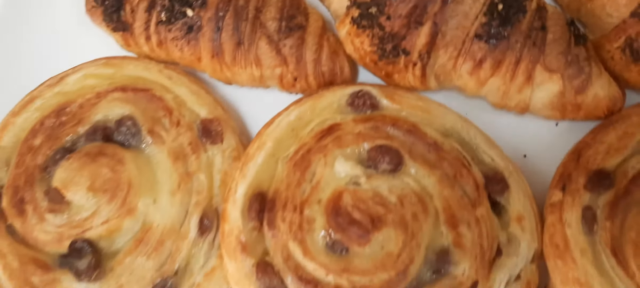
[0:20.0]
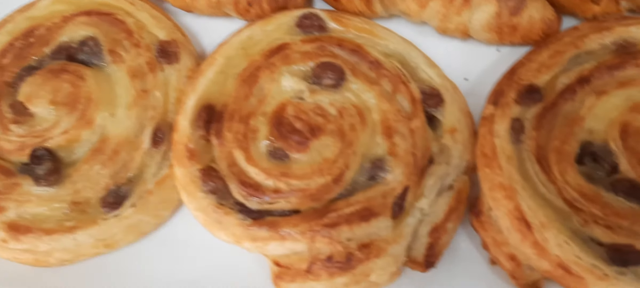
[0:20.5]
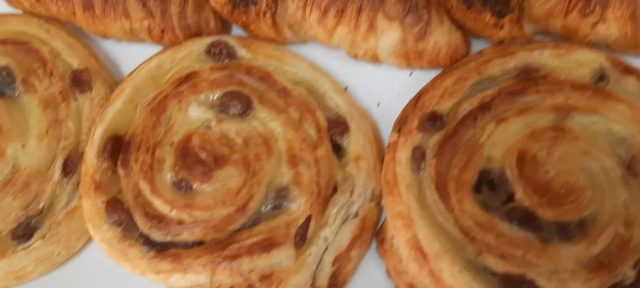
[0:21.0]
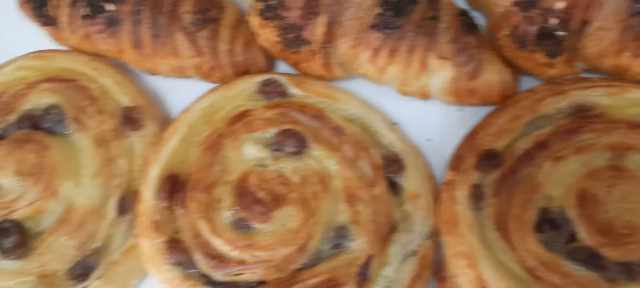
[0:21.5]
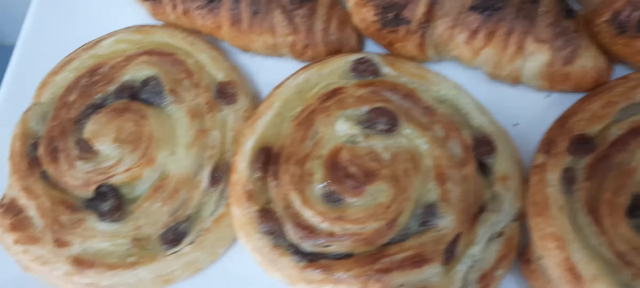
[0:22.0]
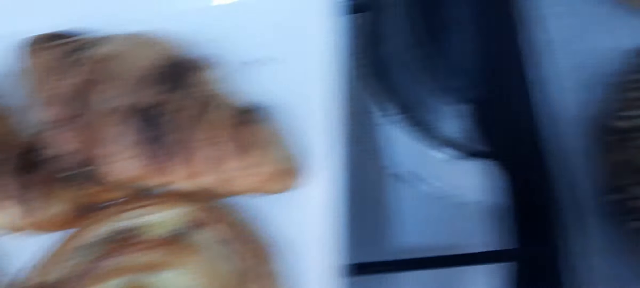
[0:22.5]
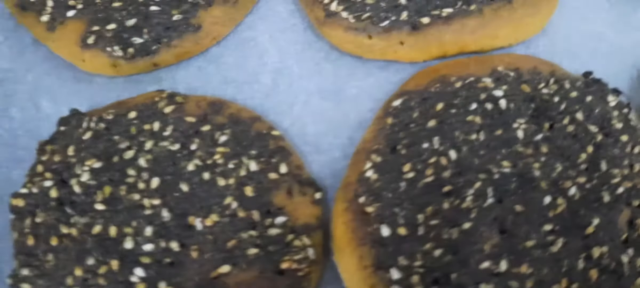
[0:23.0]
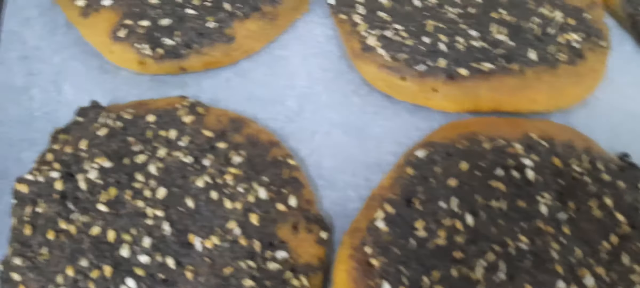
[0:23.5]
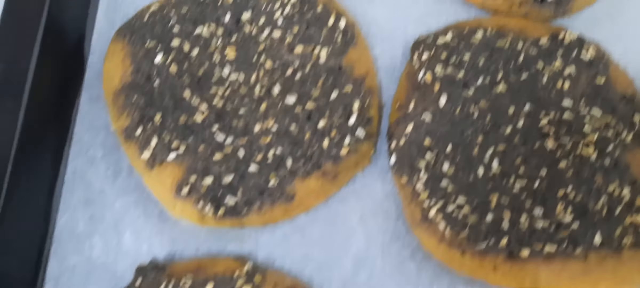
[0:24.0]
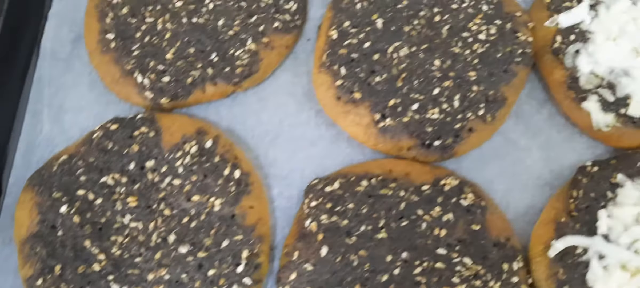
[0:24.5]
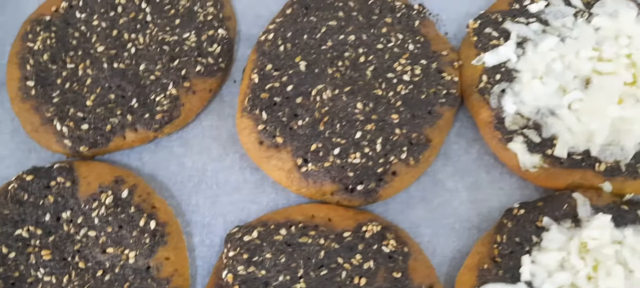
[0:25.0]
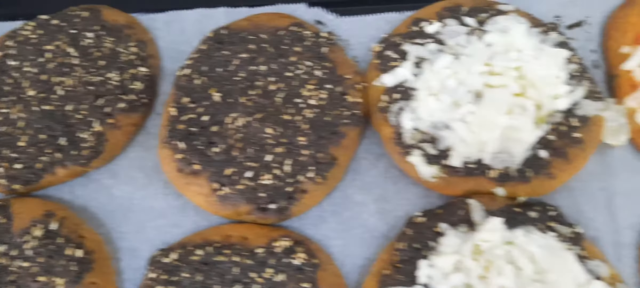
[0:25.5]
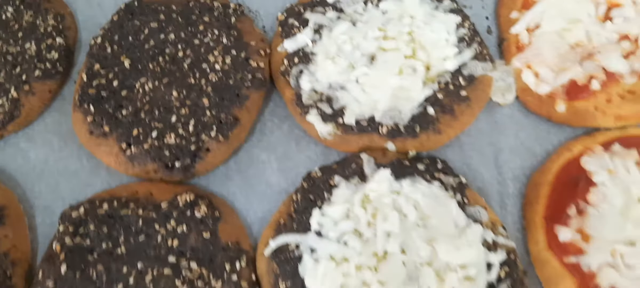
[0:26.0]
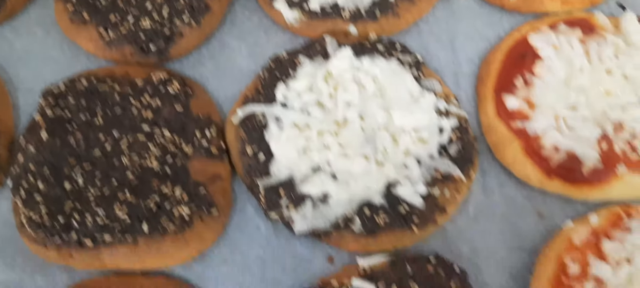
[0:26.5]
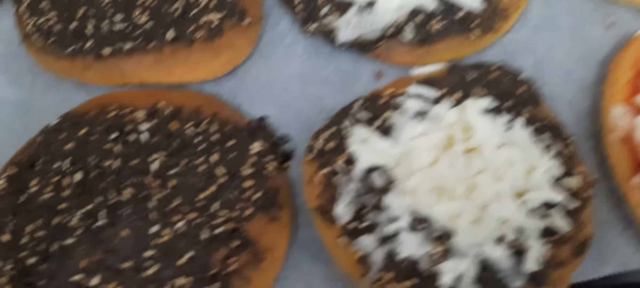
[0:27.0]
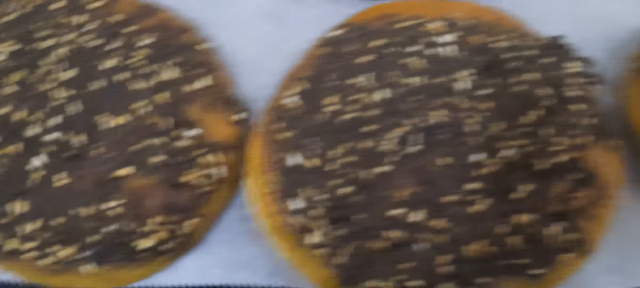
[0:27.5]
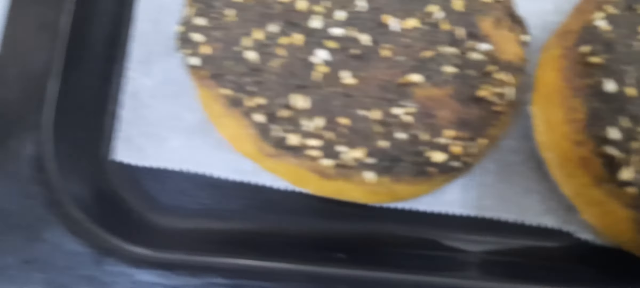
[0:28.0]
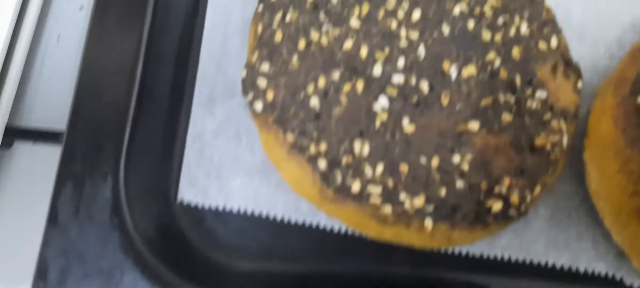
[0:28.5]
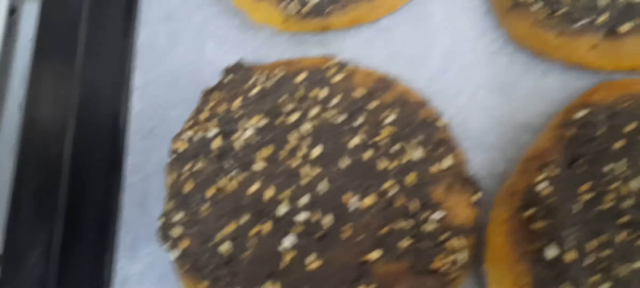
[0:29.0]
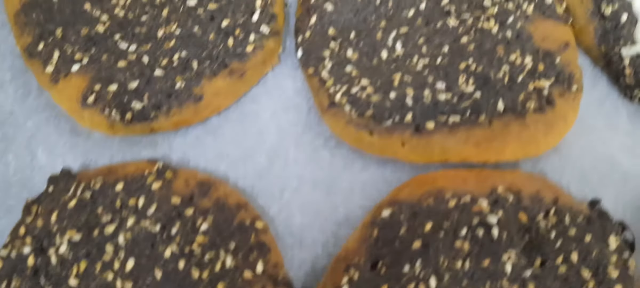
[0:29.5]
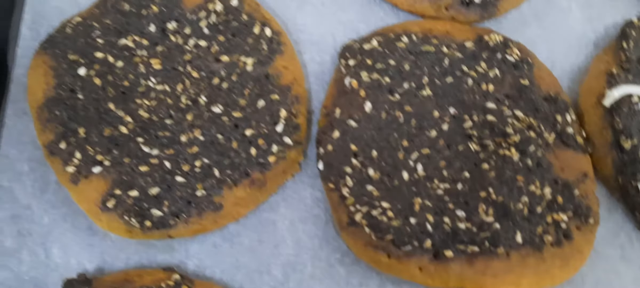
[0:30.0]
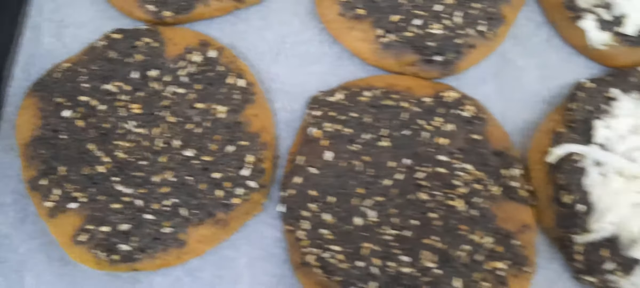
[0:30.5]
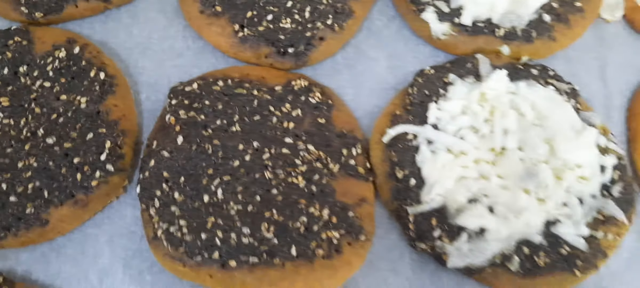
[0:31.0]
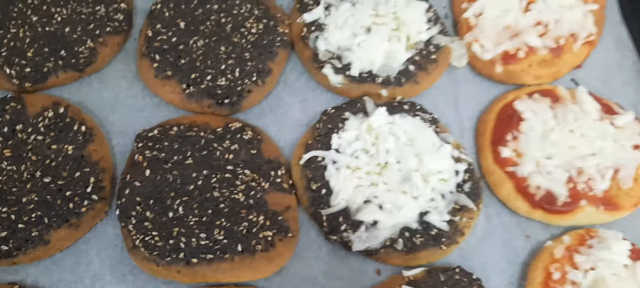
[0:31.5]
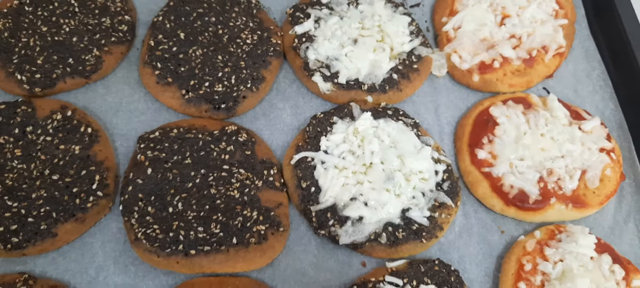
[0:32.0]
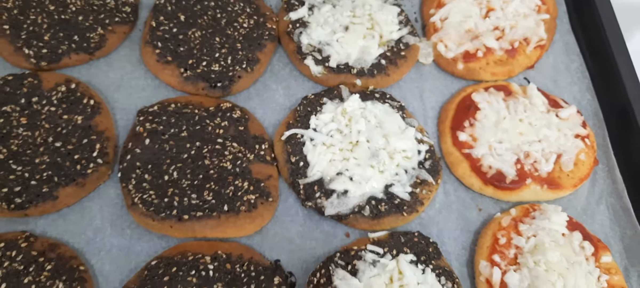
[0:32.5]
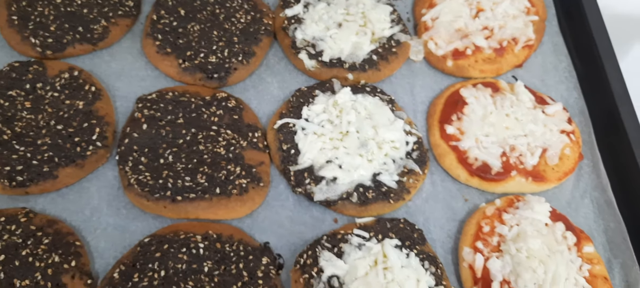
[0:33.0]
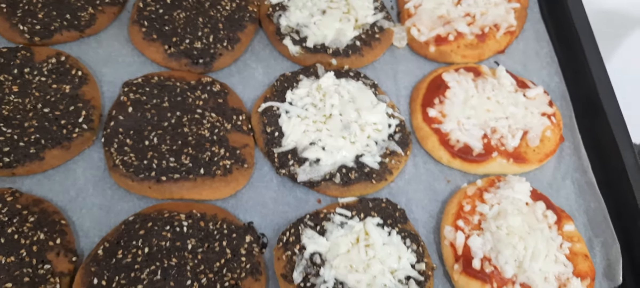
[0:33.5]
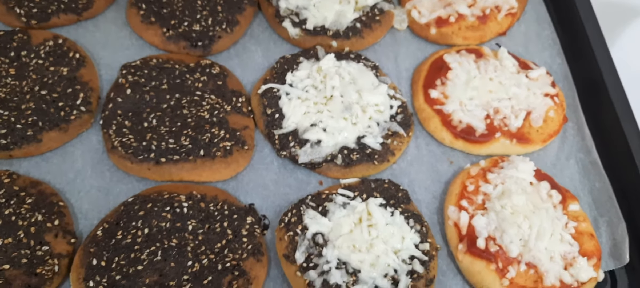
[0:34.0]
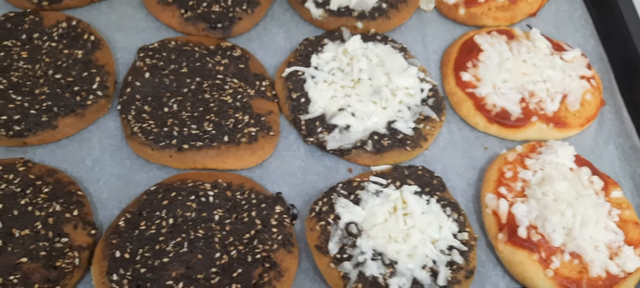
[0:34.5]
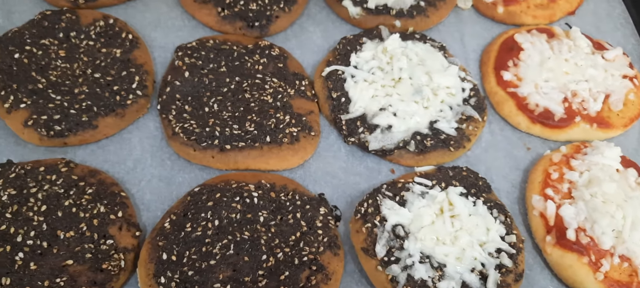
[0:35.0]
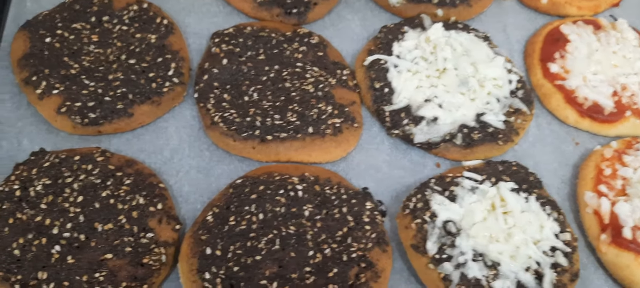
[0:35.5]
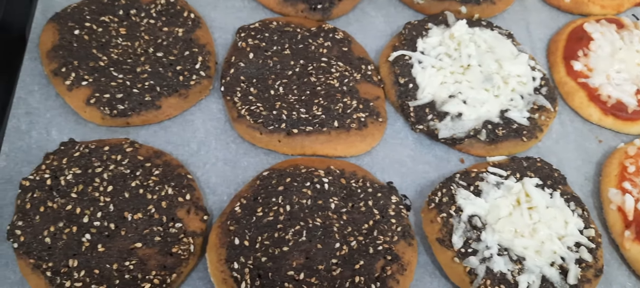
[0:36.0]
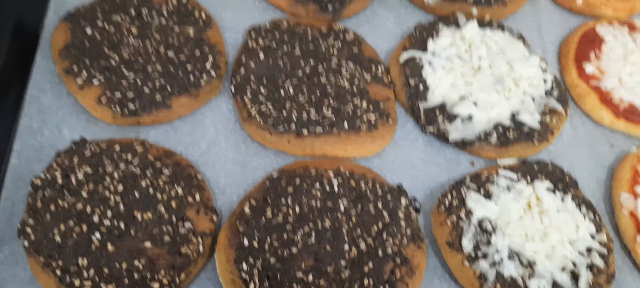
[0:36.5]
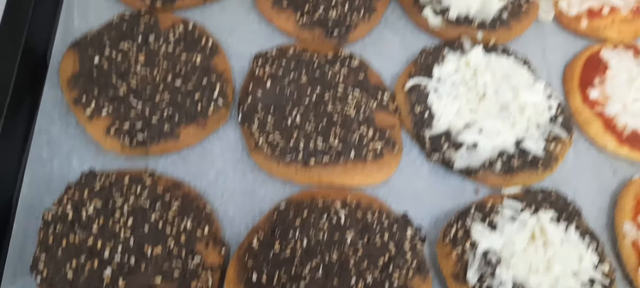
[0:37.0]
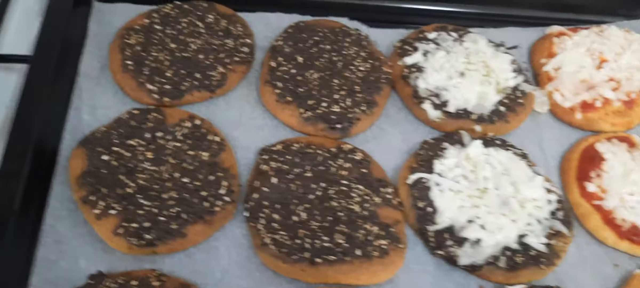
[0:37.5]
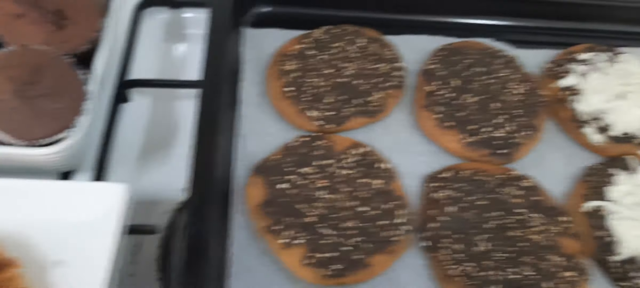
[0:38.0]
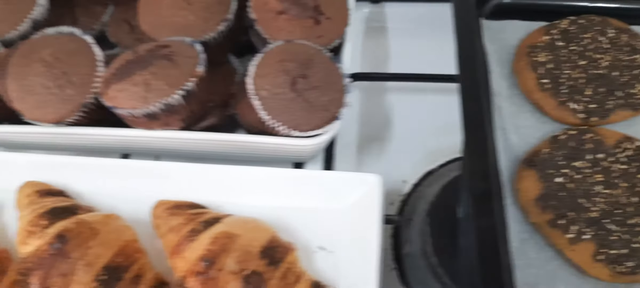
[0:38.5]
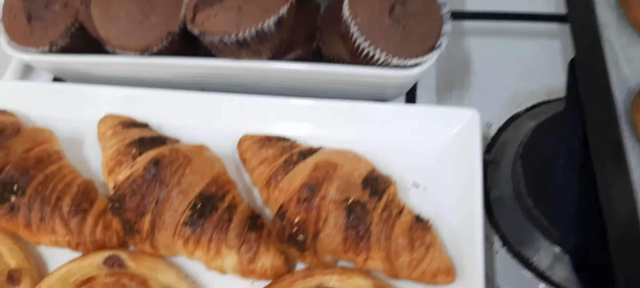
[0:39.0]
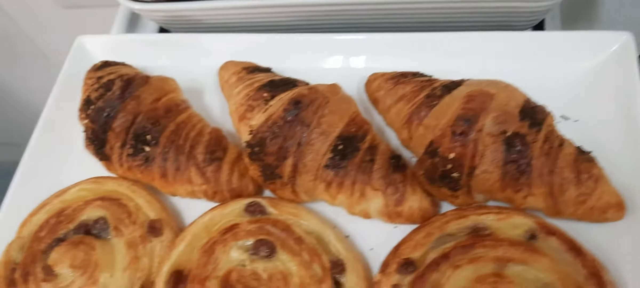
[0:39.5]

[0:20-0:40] A white platter has three light brown and tan croissants at the top, with a couple of dark spaces on them. Underneath is a row of three sticky buns, also light brown, that look kind of toasted. Little brown circles are mixed in on top of the sticky buns, either raisins or probably chocolate chips. The person with the camera holds it very close to the pan. The camera then pans to the right to another pan holding a bunch of brown cookies. The first row of cookies has just brown icing on it. The second row is the same cookies, but with white shavings that might be coconut on top of the brown icing. To the right of that are brown cookies topped with white and orange icing.